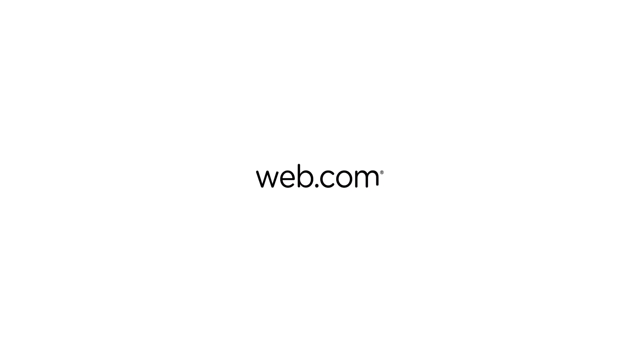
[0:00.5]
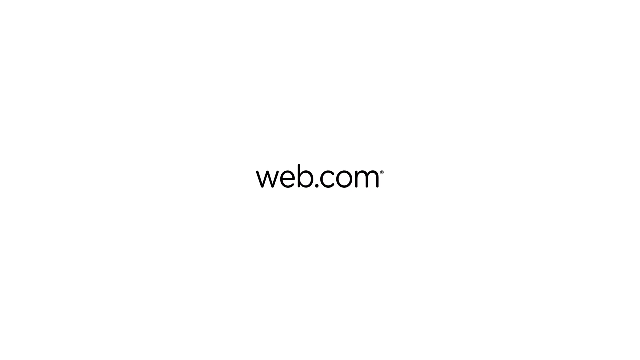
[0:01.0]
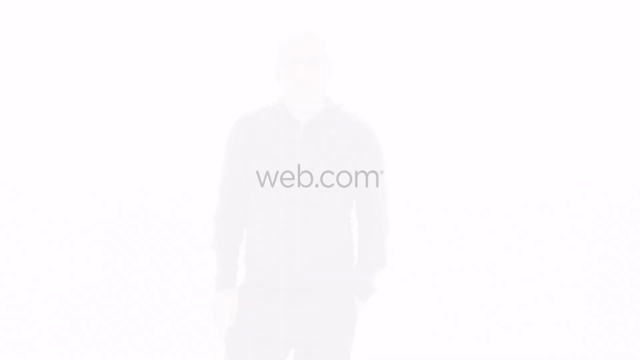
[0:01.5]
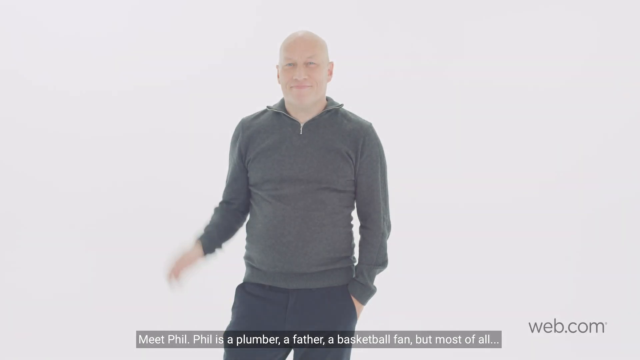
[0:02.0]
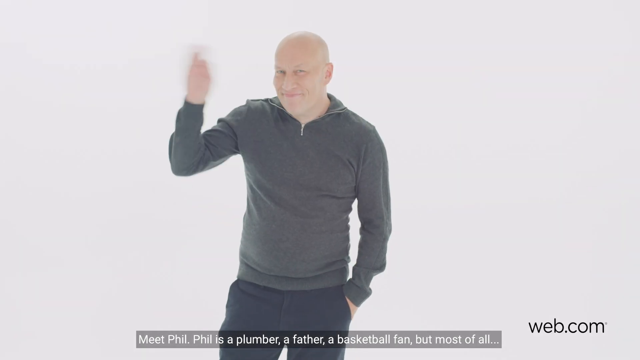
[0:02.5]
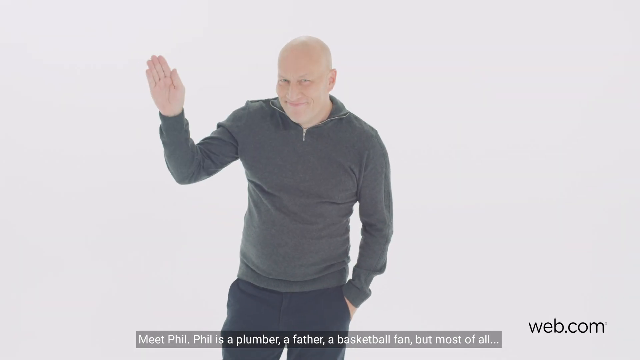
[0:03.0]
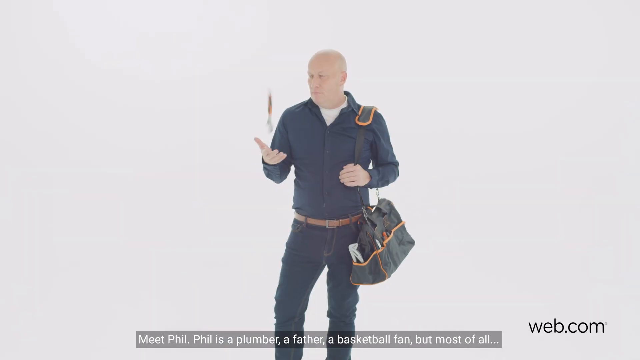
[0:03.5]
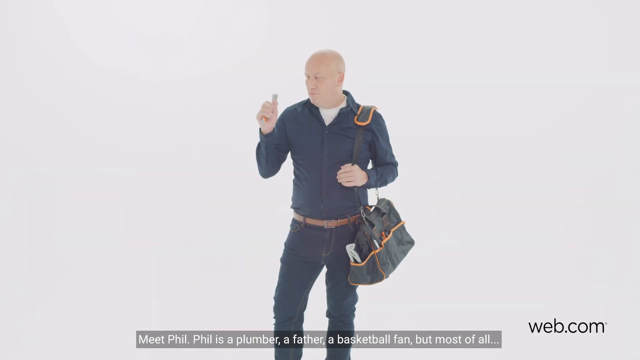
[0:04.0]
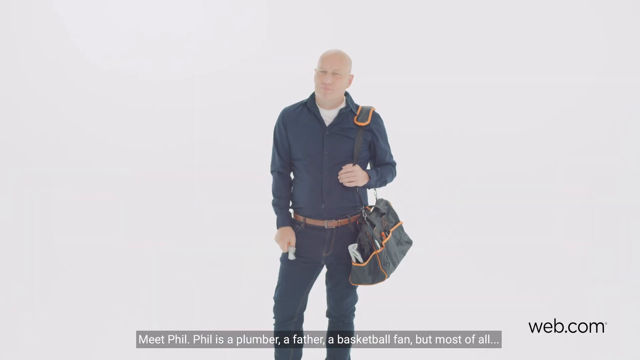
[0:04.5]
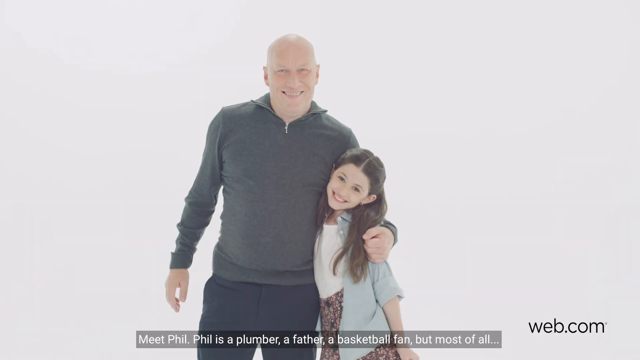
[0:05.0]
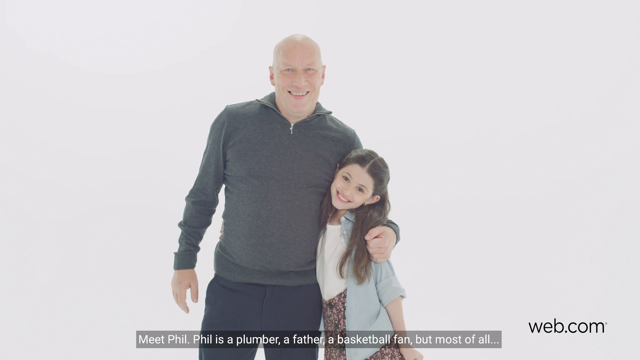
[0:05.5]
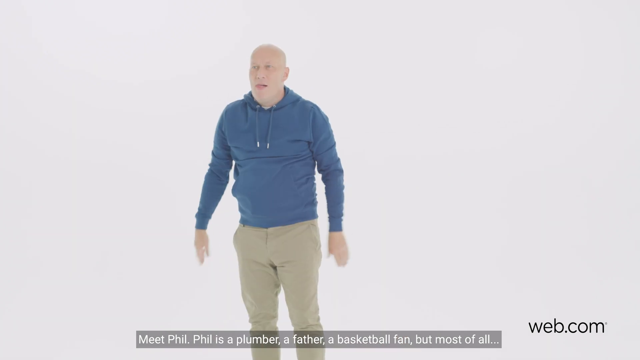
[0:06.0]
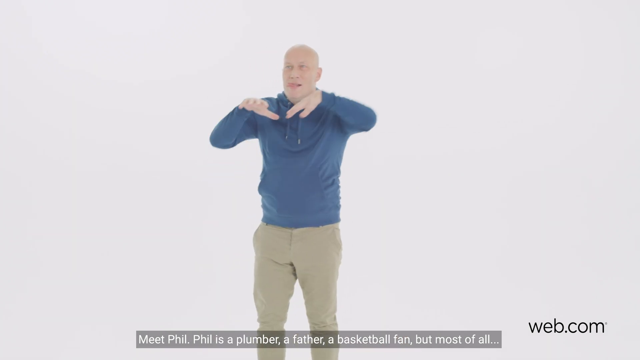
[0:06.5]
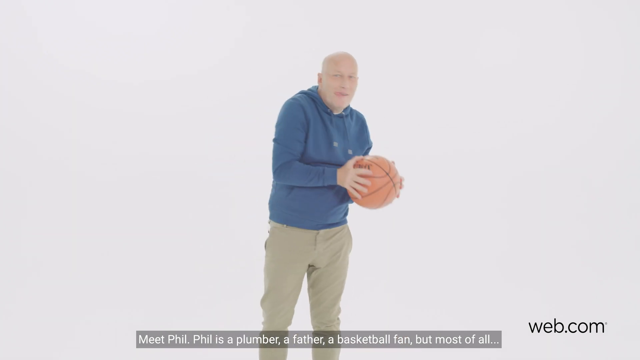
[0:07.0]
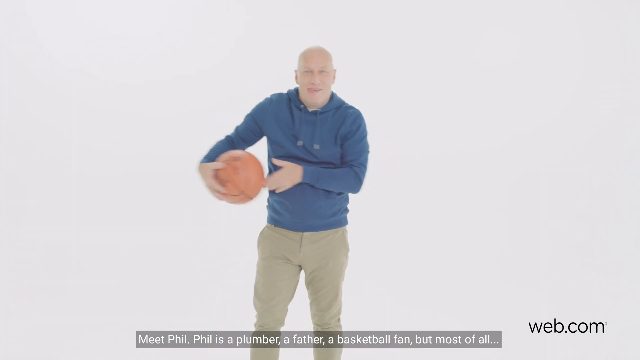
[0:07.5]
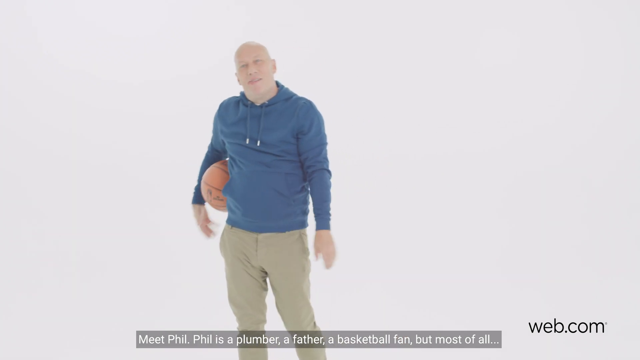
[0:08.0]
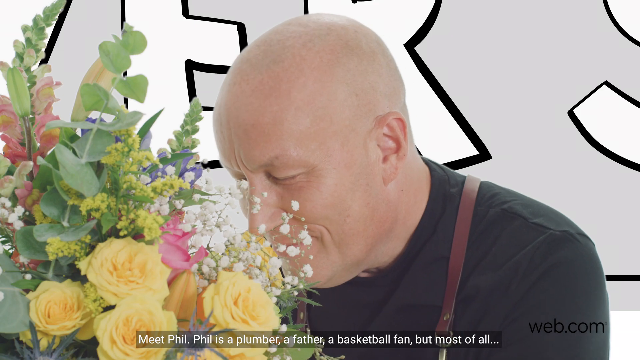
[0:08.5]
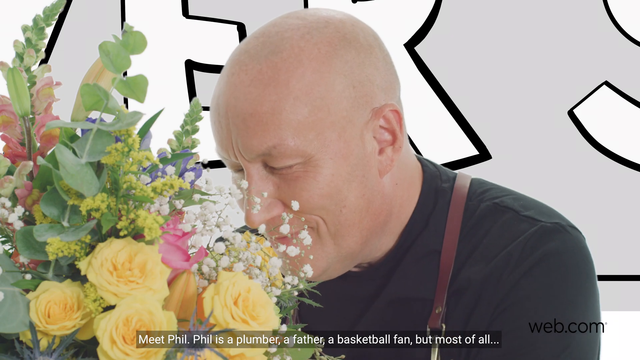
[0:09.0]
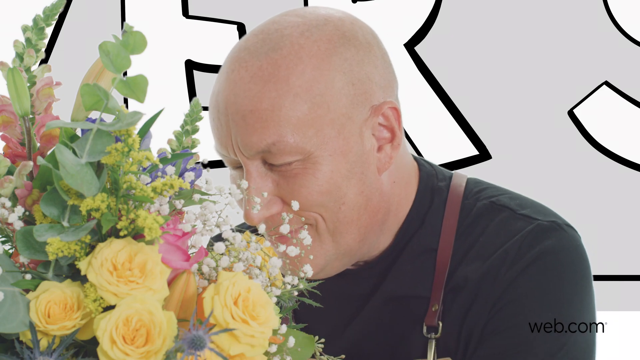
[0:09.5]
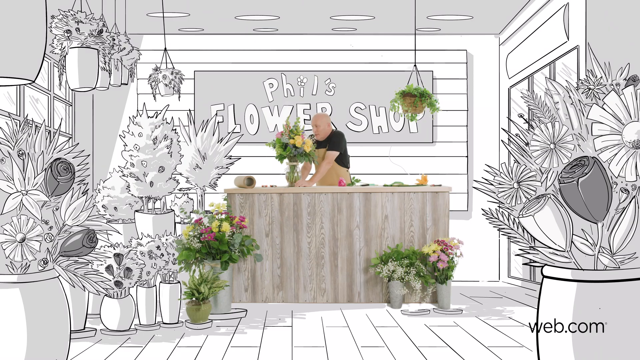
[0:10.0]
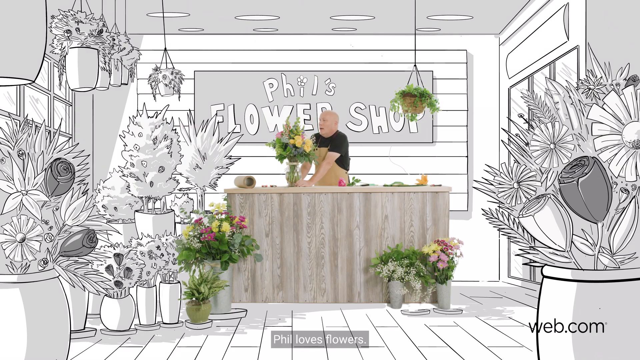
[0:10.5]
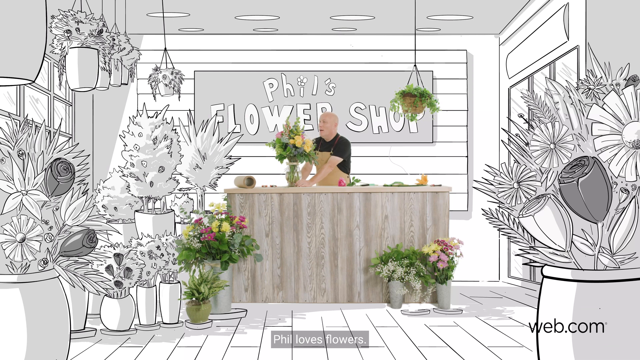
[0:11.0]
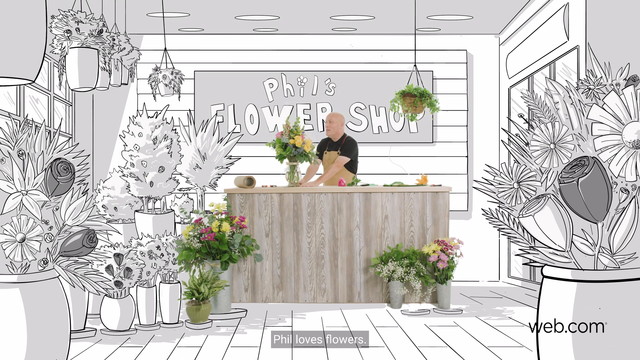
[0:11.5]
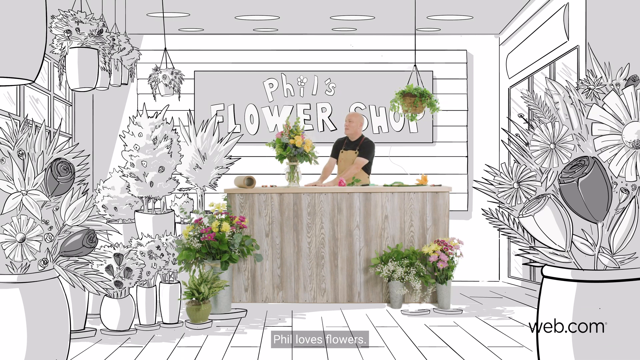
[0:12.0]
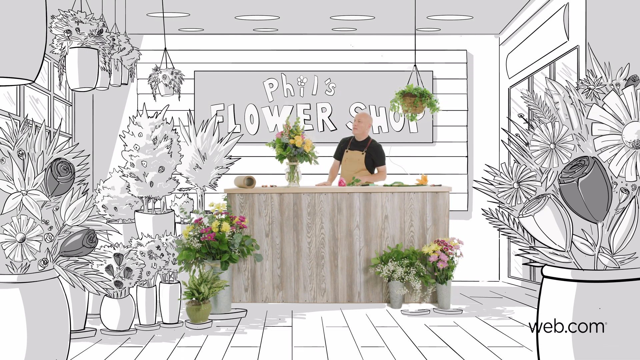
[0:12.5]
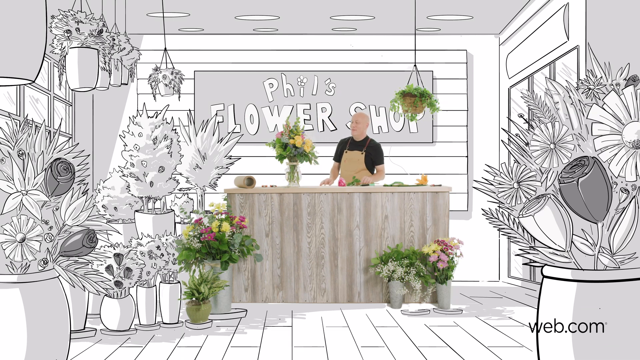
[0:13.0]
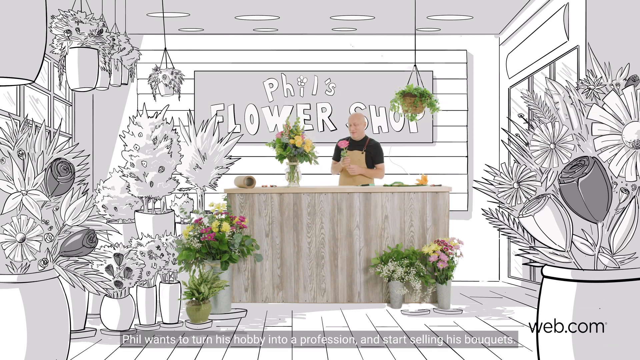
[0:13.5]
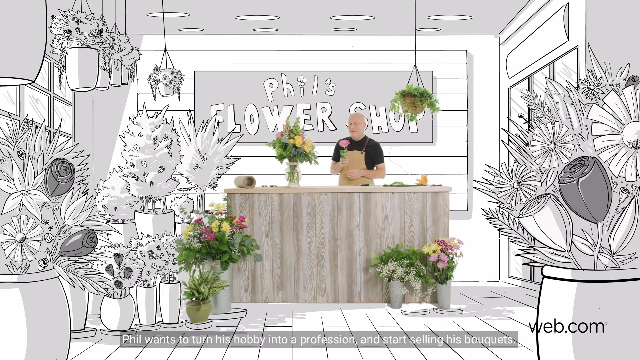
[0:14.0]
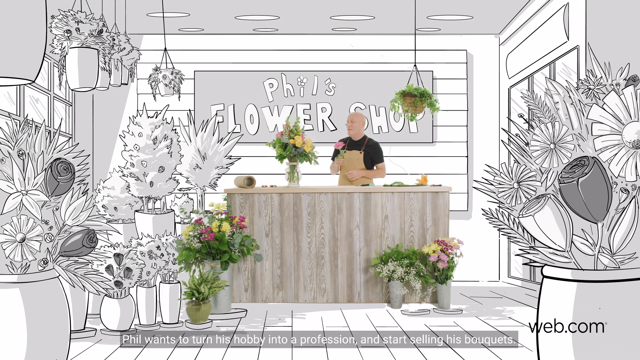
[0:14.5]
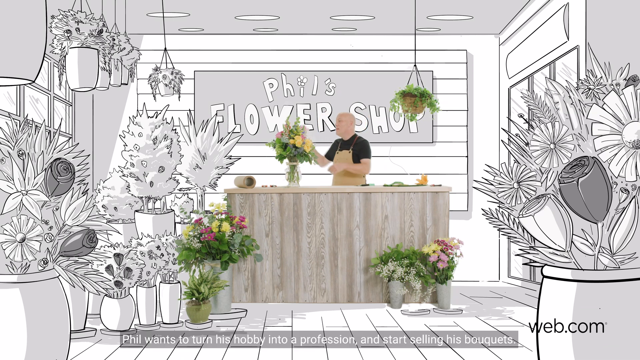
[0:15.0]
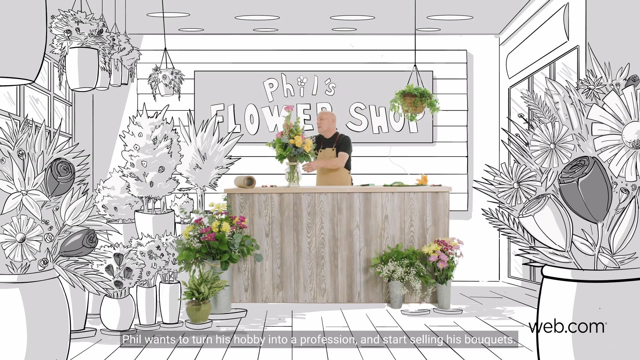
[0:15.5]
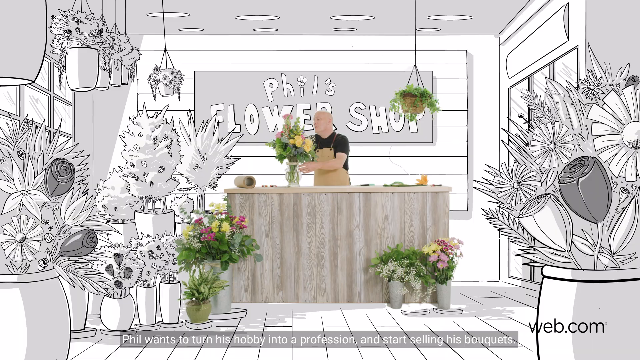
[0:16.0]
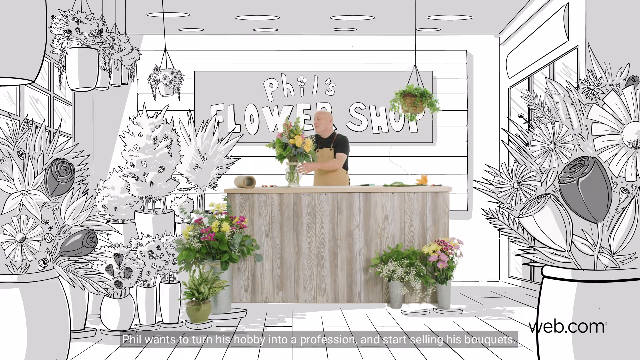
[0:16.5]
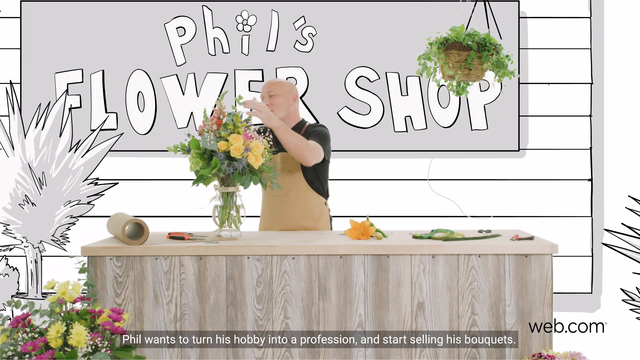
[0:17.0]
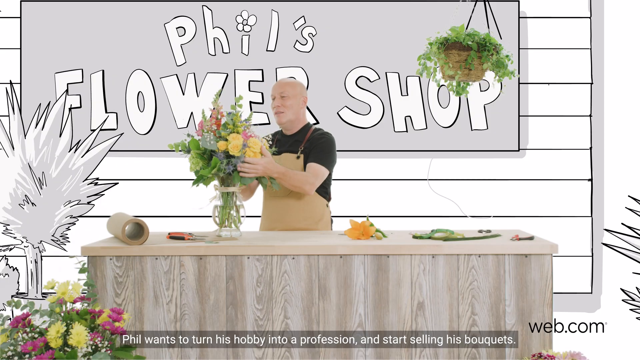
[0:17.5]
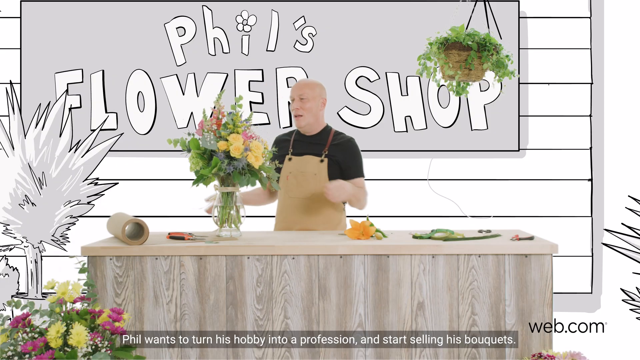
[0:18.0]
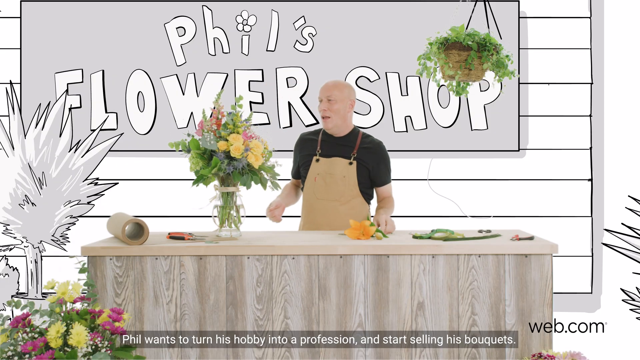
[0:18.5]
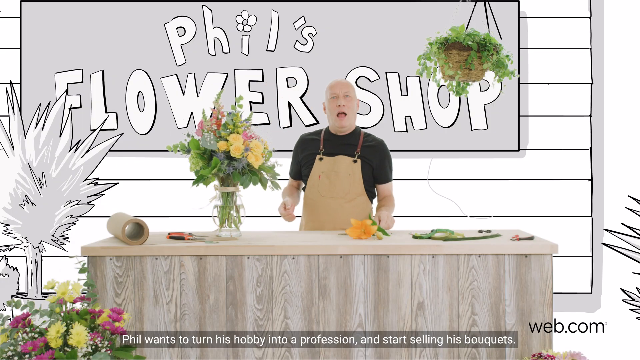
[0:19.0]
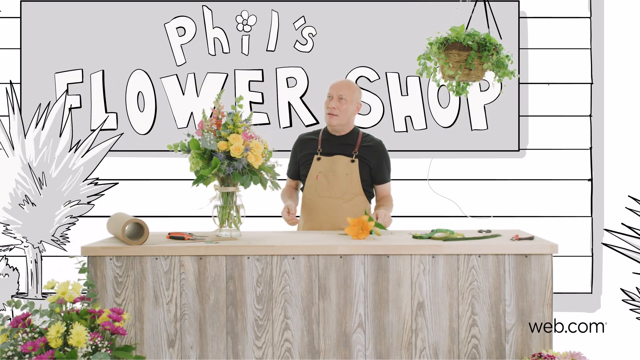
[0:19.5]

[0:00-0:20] The name web.com appears. A man is then seen in various poses. First, a middle-aged man, apparently around 55, wears a dark gray long-sleeve top with a zippered collar and dark gray or black pants against a white background. He smiles, looks into the camera, and waves with his right hand while his left hand is in his pocket. Next, he wears dark pants with a tan belt and a dark blue buttoned long-sleeve shirt over a white t-shirt. What appears to be a tool bag is over his right shoulder, and he holds it with his left hand. With his right hand he throws something that seems to be a tool up in the air and catches it, then looks at the tool and smiles. In the next scene, the same man, again in the dark gray zippered long-sleeve top and dark gray or black pants, smiles into the camera with his right arm hanging along his body and his left arm around the shoulders of a young girl who might be his daughter. The girl has long black hair and also smiles into the camera; she wears a light blue shirt with rolled-up sleeves over a white t-shirt, and jeans. They are seen from roughly the middle upwards against a white background. In another scene, the man wears tan chino pants and a blue hoodie top and is seen from about the knees up. He catches a basketball thrown from what looks like next to the camera, catching it on the left of his body with two hands, then rolls the ball to the right side of his body, where he holds it with his right hand. He is then seen in a cartoon-style drawn flower shop, smelling a bunch of flowers. The picture mixes cartoon style and photo style: photo-style flowers are in the front on a counter, and behind it is a cartoon-style background with a lot of flowers.